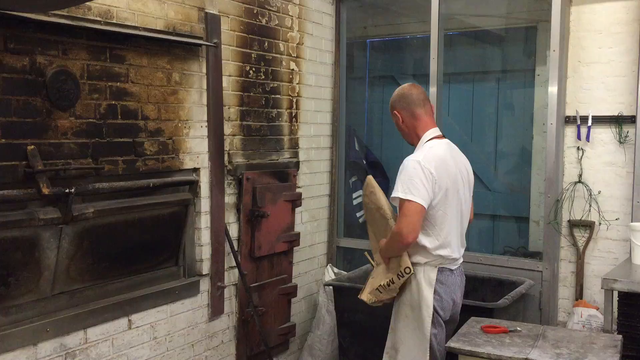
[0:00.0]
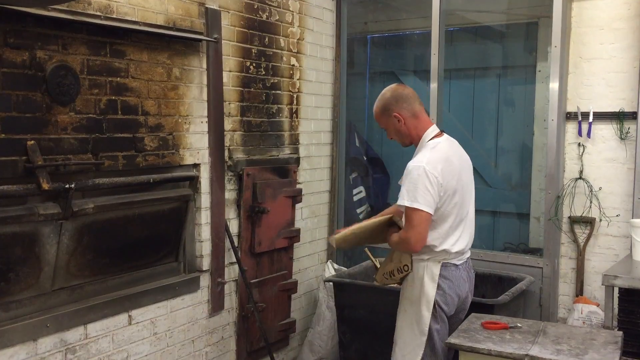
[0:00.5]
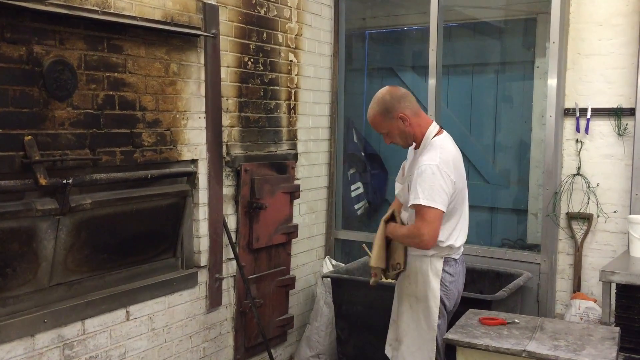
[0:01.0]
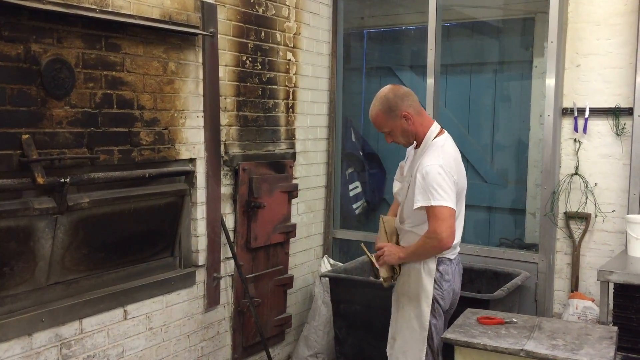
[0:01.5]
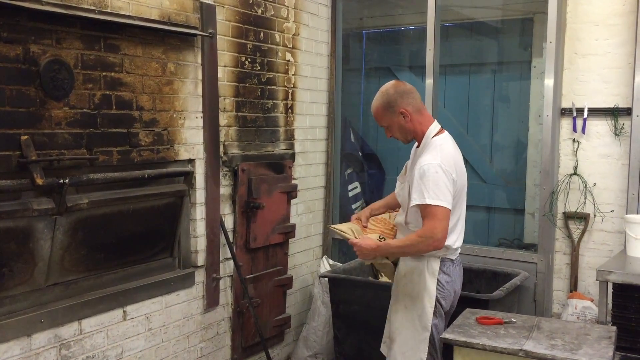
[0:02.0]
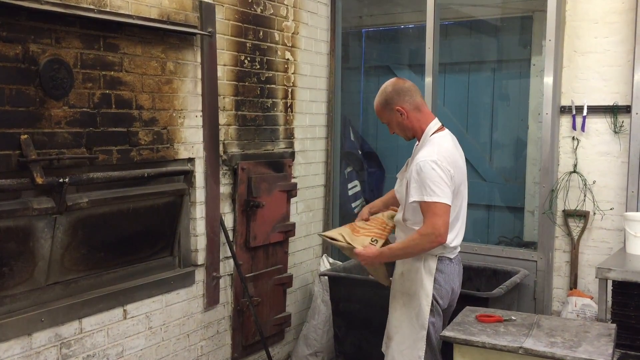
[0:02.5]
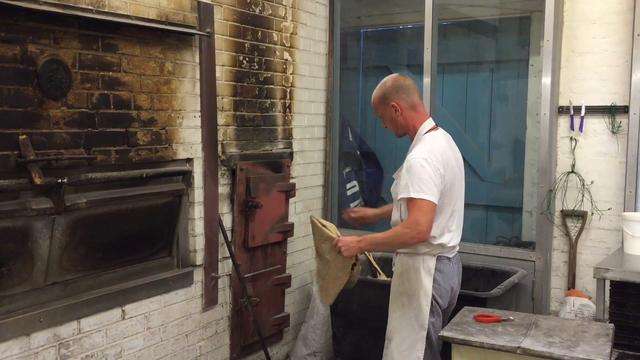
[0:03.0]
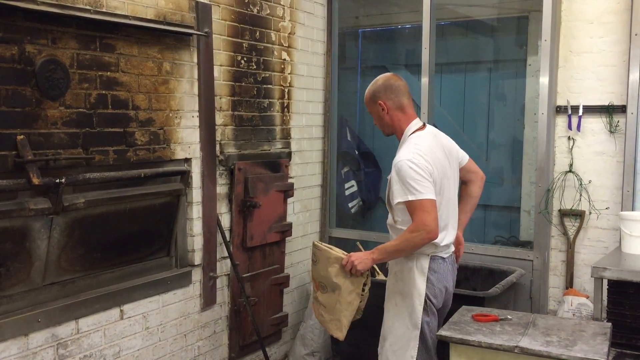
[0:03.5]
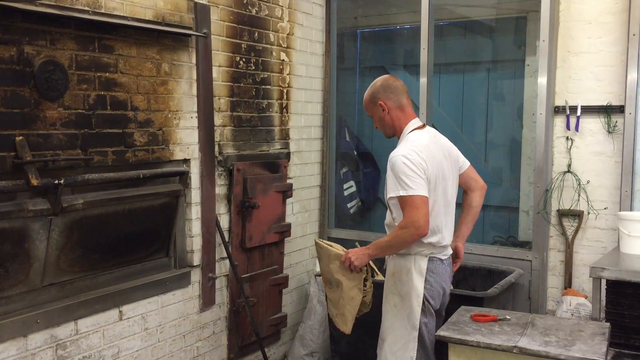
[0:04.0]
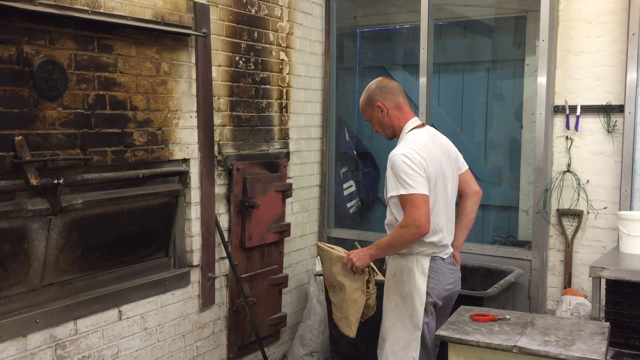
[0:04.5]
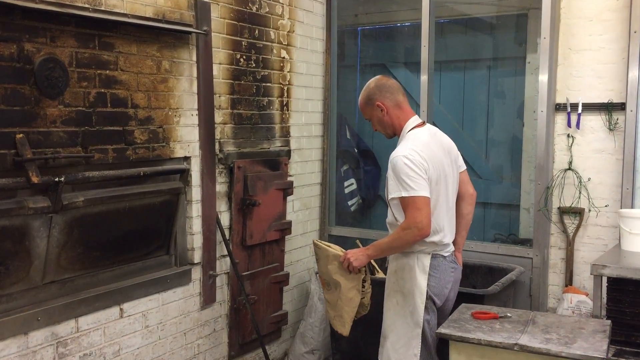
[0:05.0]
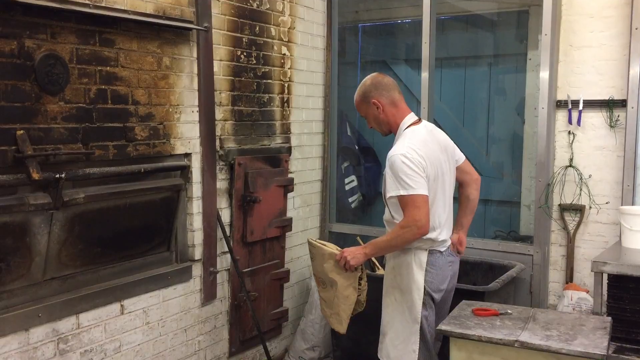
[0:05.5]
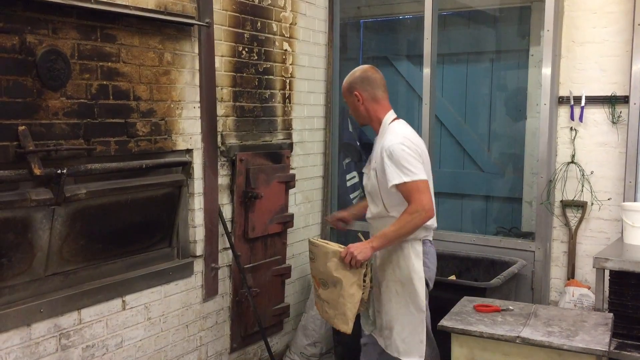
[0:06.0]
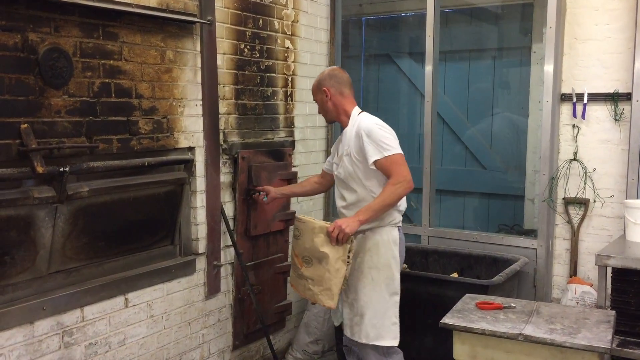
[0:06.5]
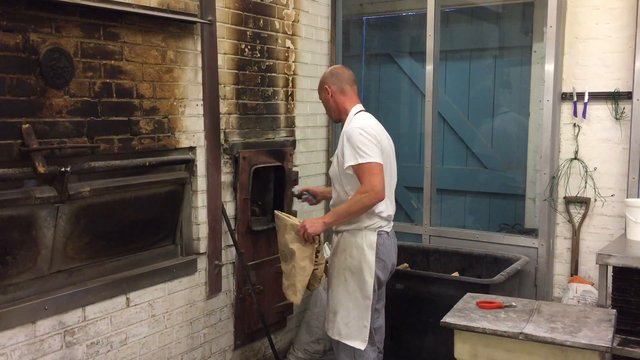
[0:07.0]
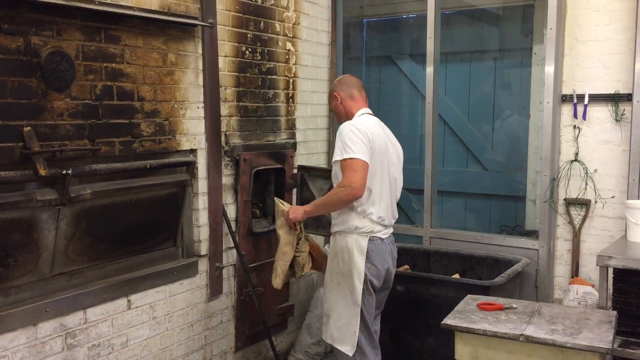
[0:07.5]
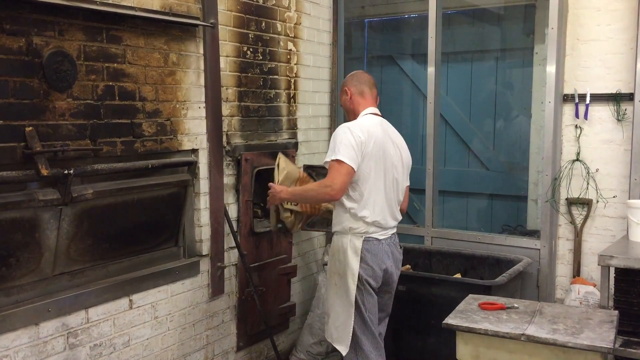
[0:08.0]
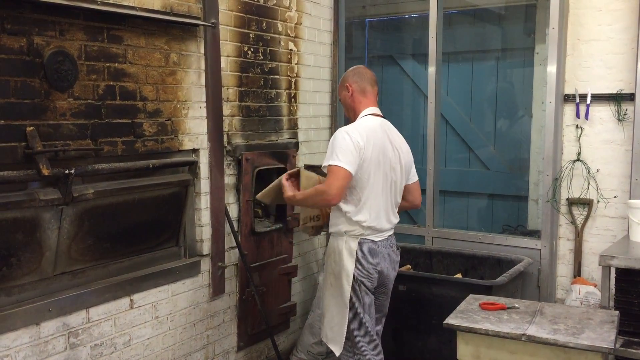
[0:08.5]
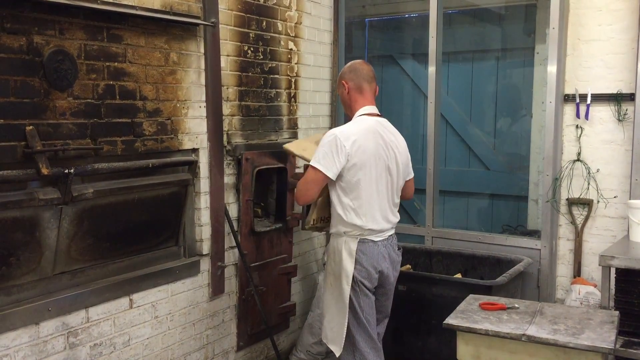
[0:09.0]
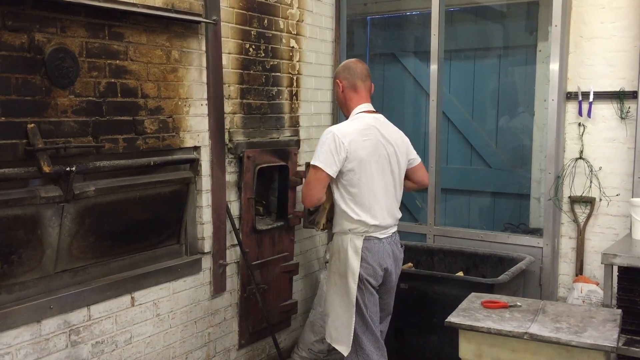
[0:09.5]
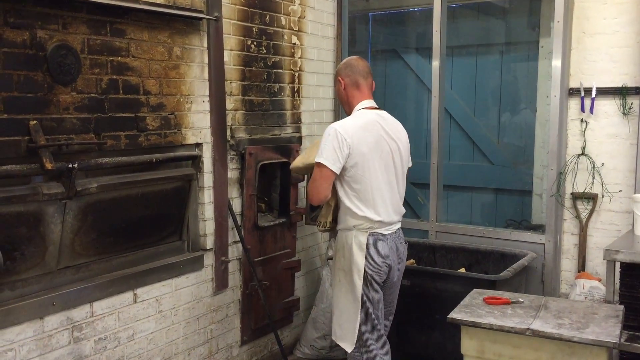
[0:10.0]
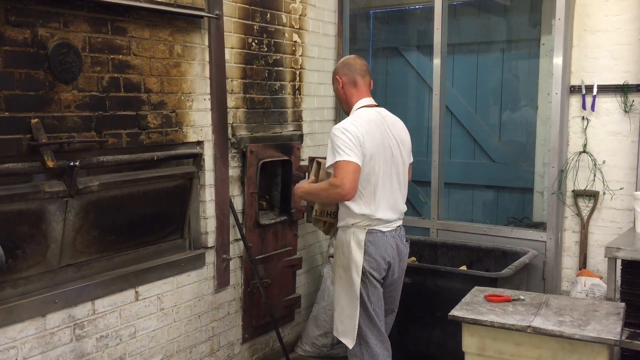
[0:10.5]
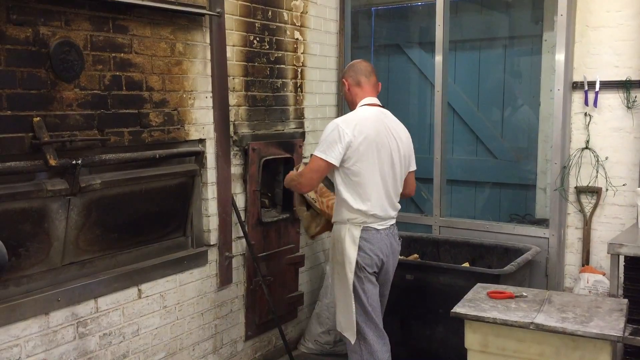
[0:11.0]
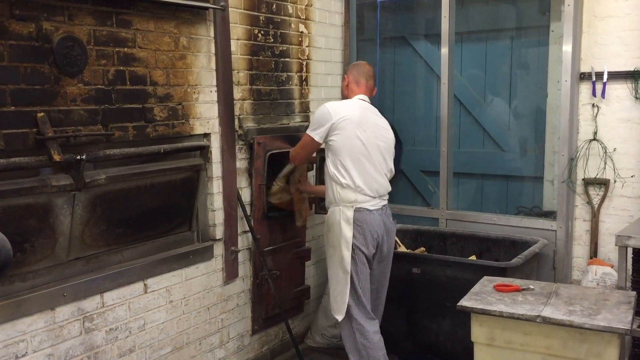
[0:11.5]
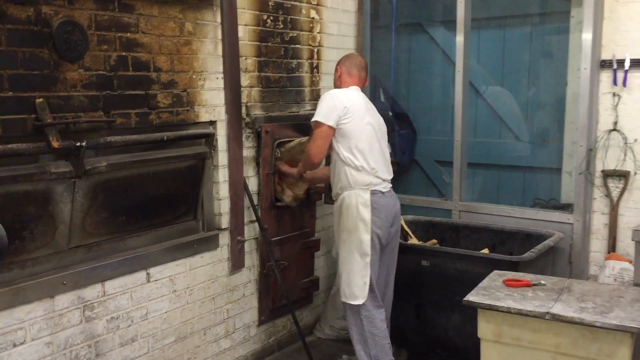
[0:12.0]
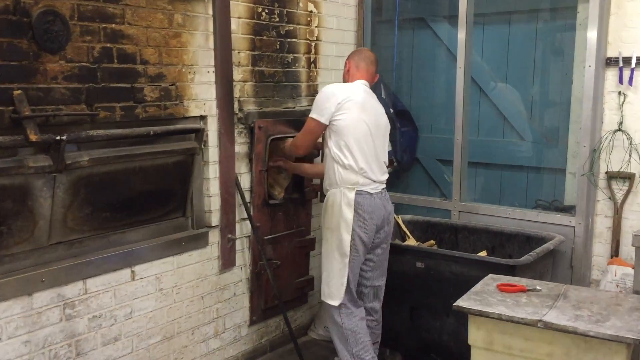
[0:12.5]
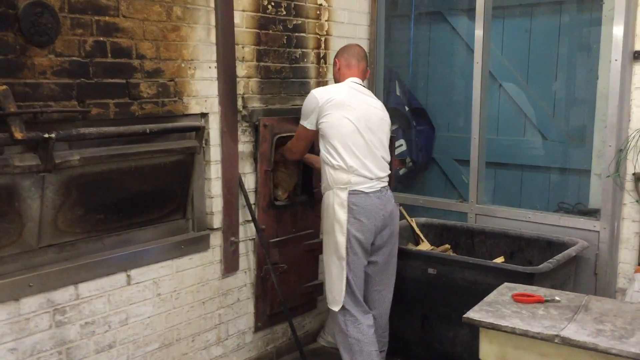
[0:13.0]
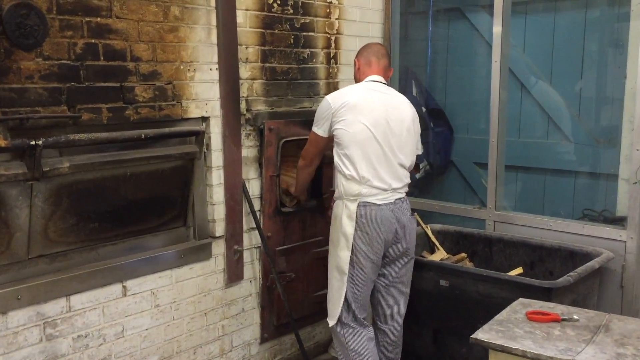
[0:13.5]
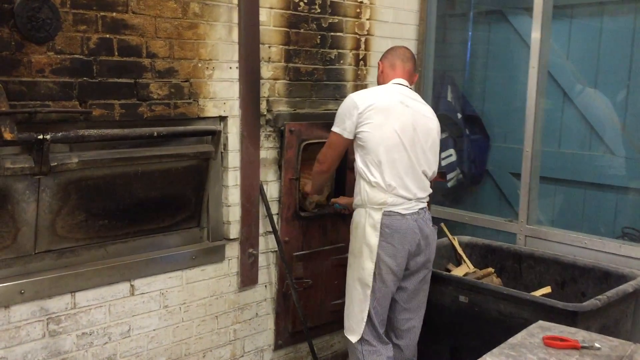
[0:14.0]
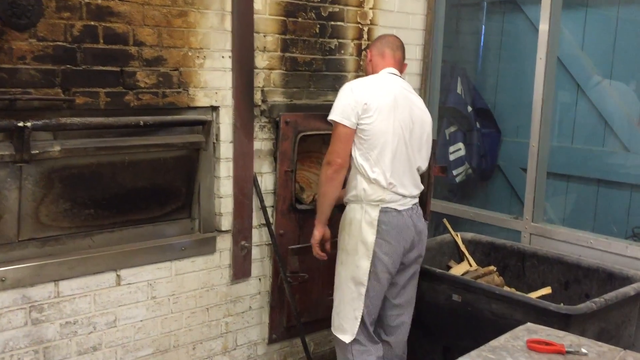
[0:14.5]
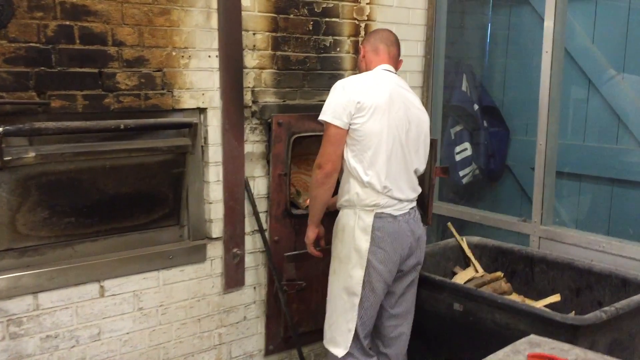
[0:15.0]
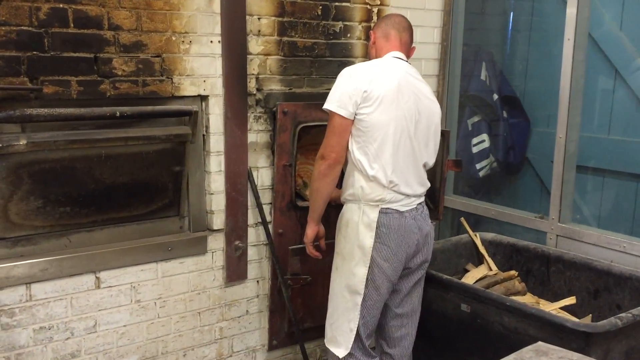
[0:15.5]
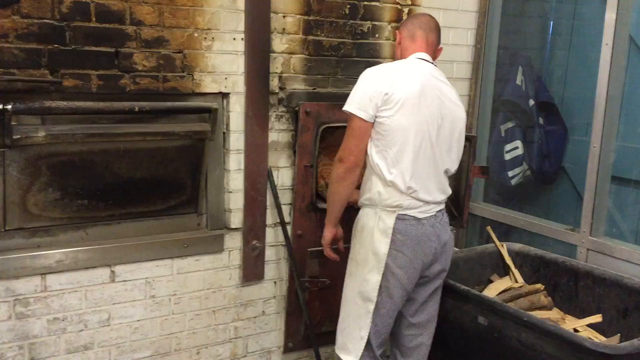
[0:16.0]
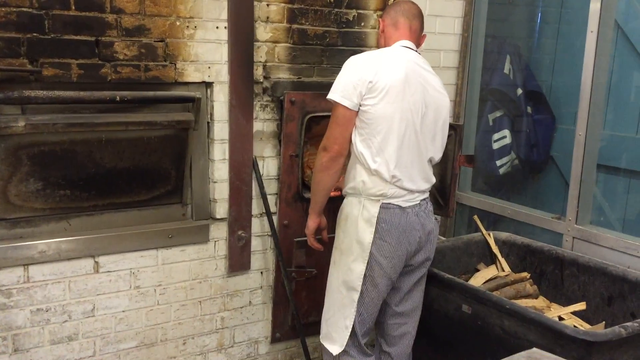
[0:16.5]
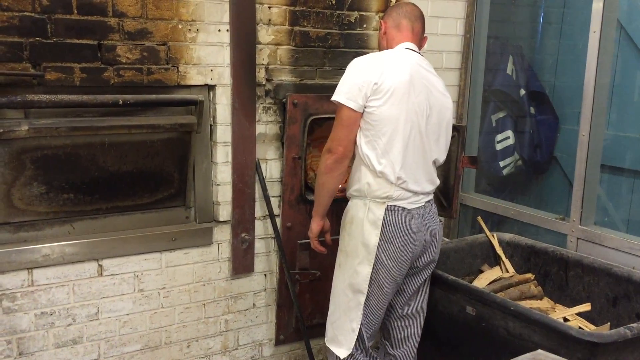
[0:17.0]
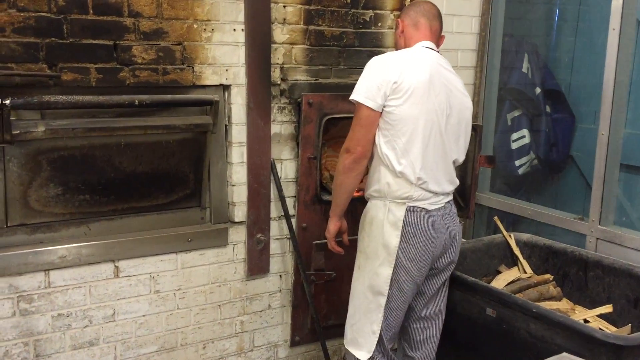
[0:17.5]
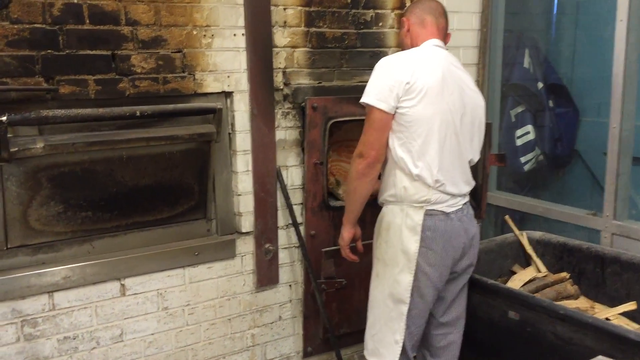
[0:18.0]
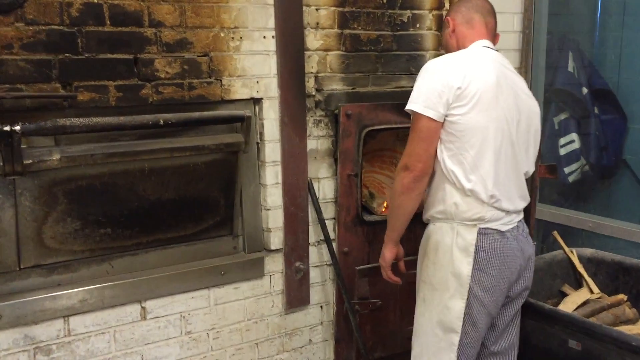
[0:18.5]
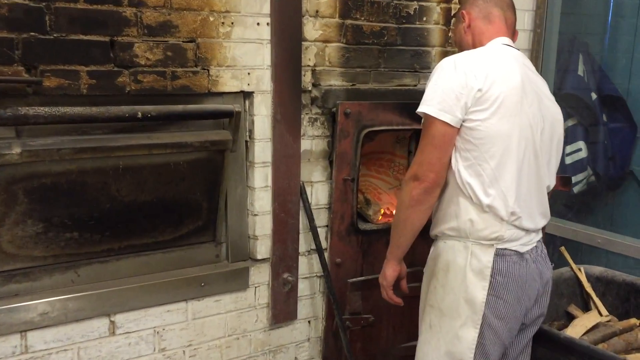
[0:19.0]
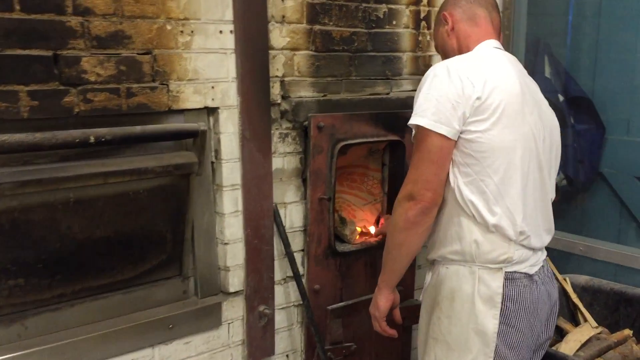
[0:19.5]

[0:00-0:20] A man works in a kitchen, wearing a white shirt and an apron. He holds a bag, apparently a bag of some sort of food, and folds it up, seemingly having taken out all he wants from it. He puts the bag into an opening in the wall, which is next to what looks to be two oven doors. The area around the door he is dealing with appears charred and burnt, as does the area above the oven doors to his left. To his right is a window with a fence visible outside. A large plastic bin is next to his leg. He stuffs the bag into the opening and lights it on fire, burning it; it is unclear whether this is fuel for the oven or simply how he disposes of the empty paper bag.